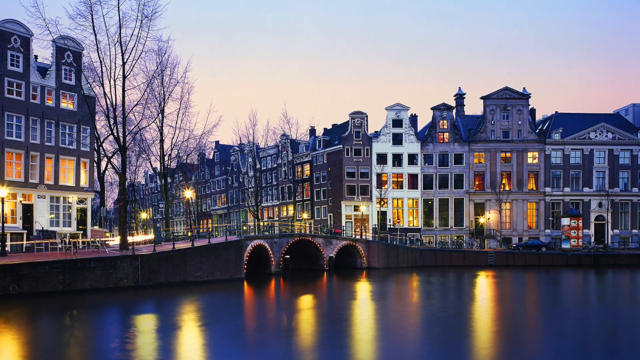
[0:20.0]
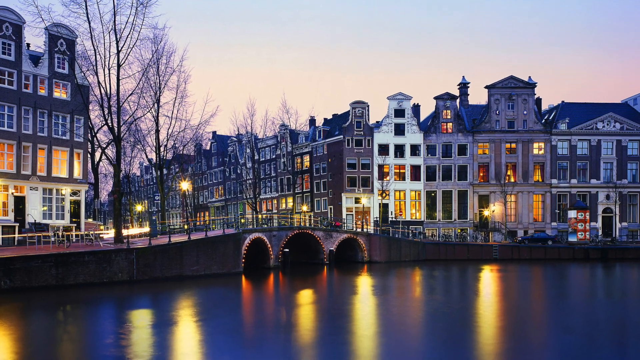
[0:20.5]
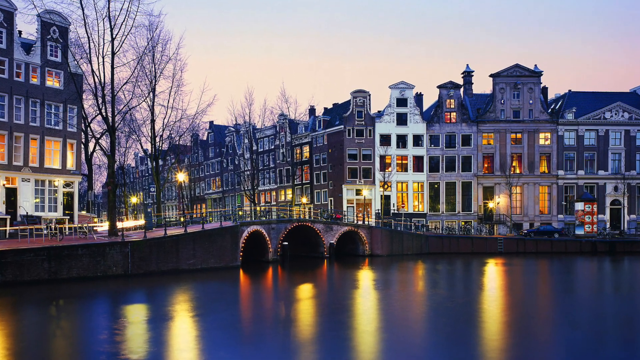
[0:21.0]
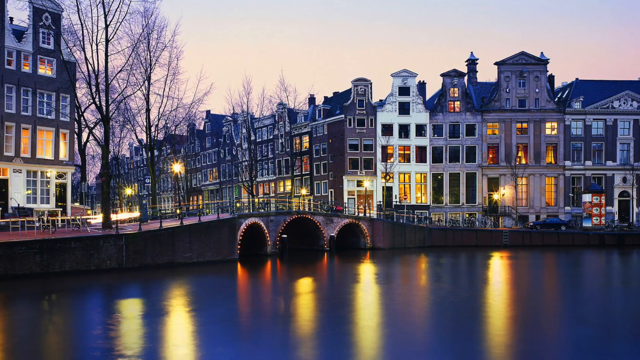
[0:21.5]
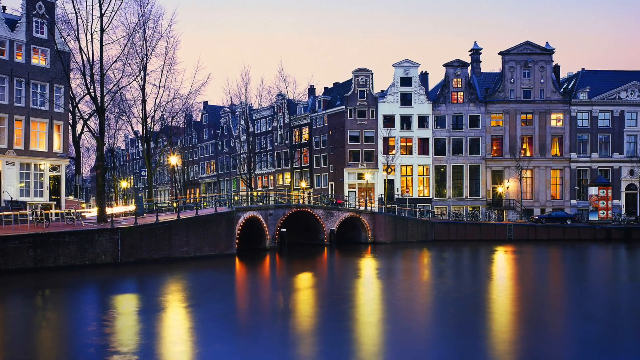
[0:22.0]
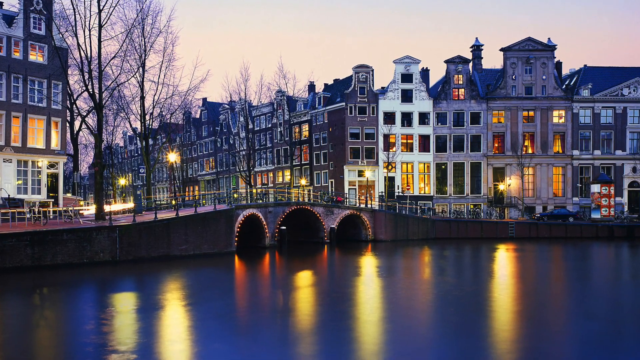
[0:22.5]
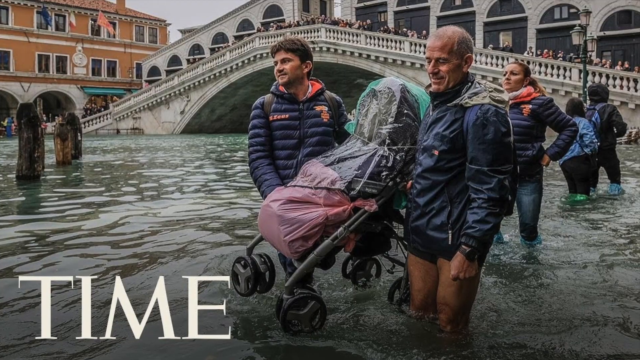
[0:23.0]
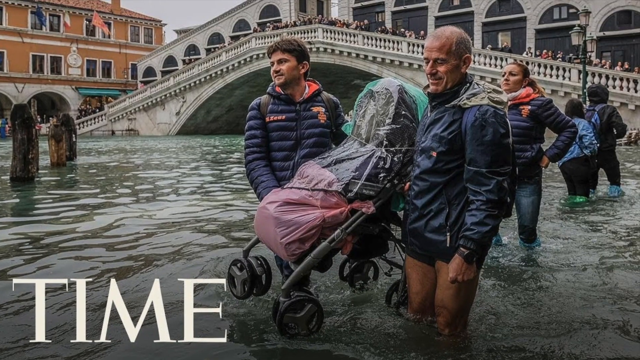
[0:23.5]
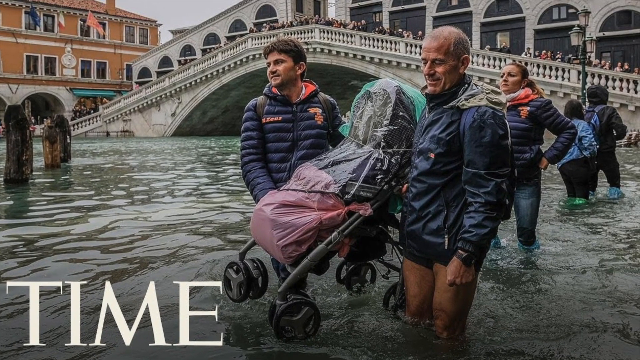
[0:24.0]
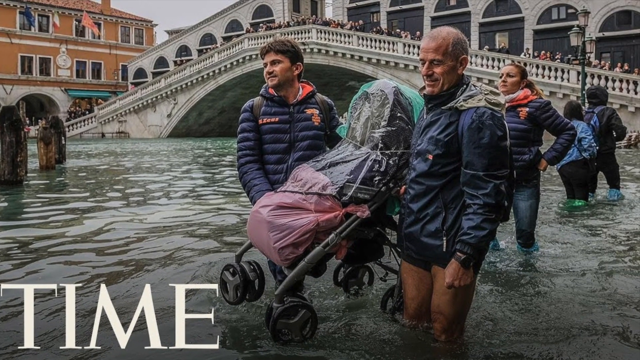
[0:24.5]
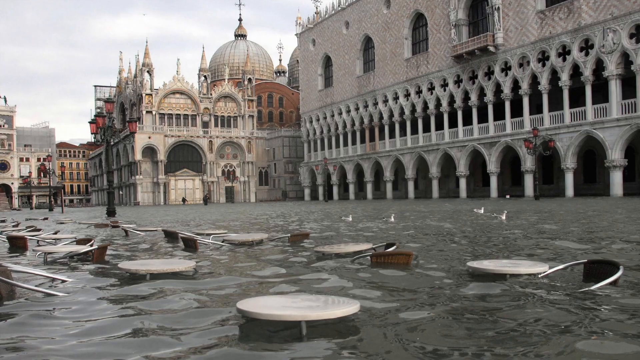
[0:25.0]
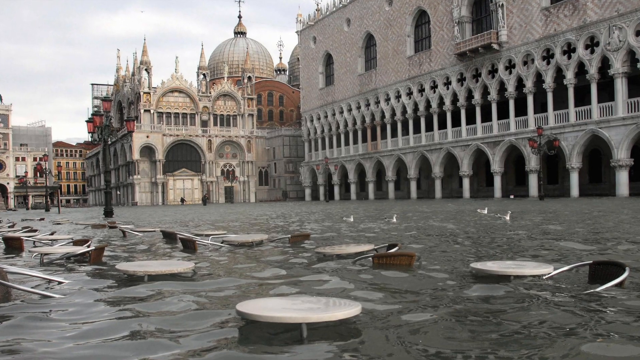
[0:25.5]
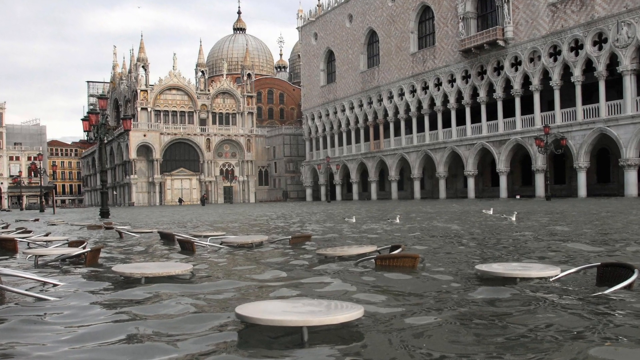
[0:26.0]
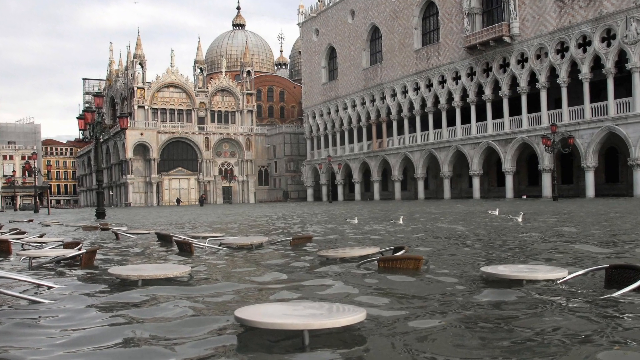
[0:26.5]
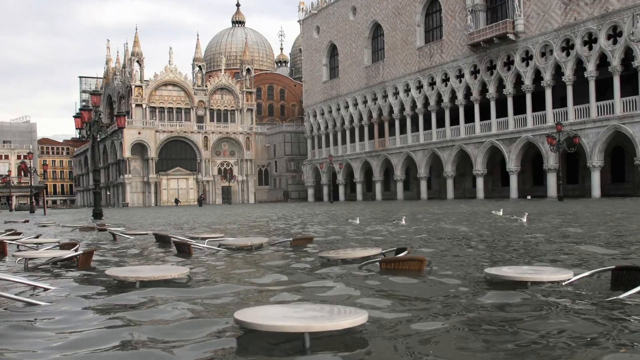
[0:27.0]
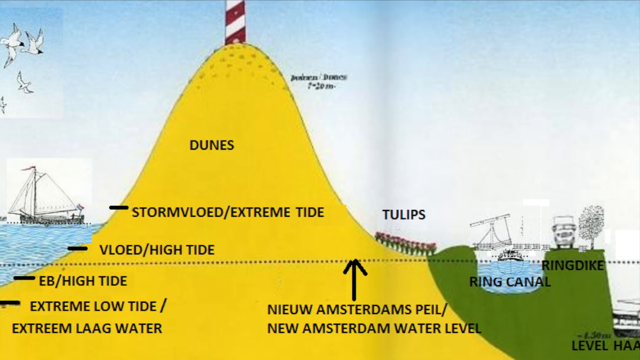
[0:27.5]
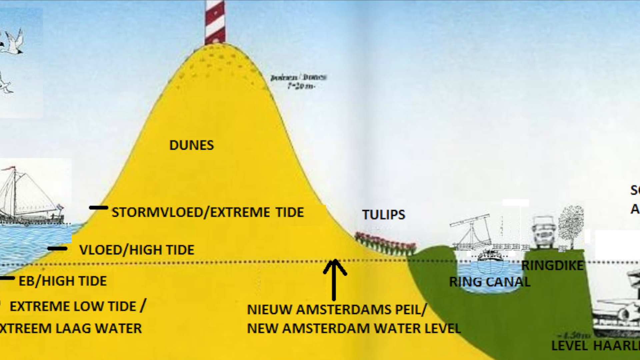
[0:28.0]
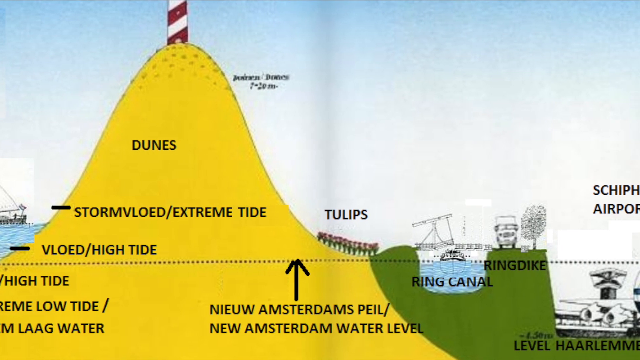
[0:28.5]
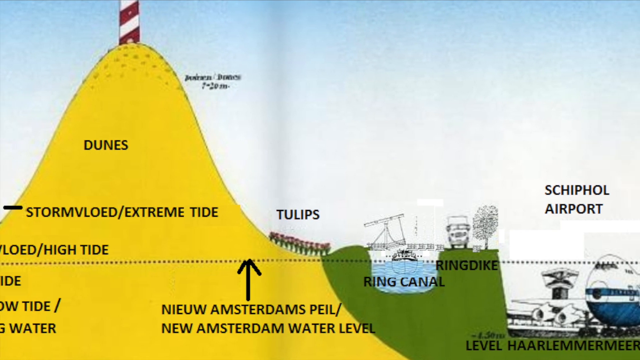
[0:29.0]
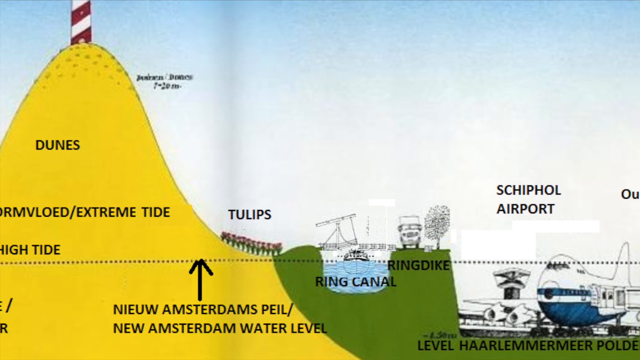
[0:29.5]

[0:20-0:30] The bridge is shown at dusk, with lights reflecting onto the dark river in front of it. The video moves to a shot of flooding that looks like it is from a magazine called Time, since that name is in the bottom left-hand corner. Two men in the picture hold up a buggy with a pink cozy toes on it, and behind them is a woman wearing an orange scarf; they are all knee-deep in water. The view pans to a street where the water is at a high level, apparently outside a cafe, as there are tables and chairs; the water is up to the level of the tables. Four white ducks swim along the river. The video then moves to a scientific diagram of sand dunes, tulips, a canal and Schiphol Airport, apparently showing Amsterdam.